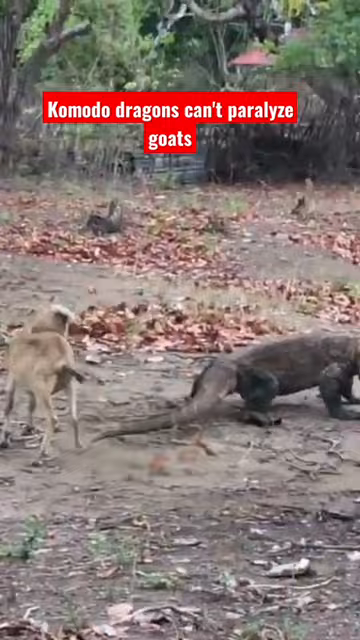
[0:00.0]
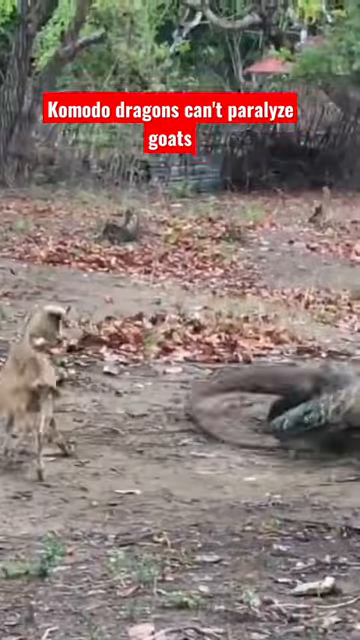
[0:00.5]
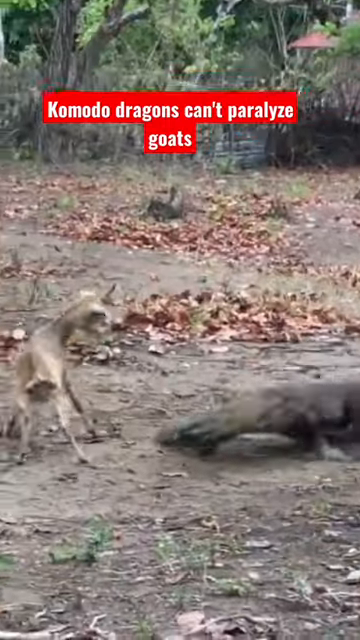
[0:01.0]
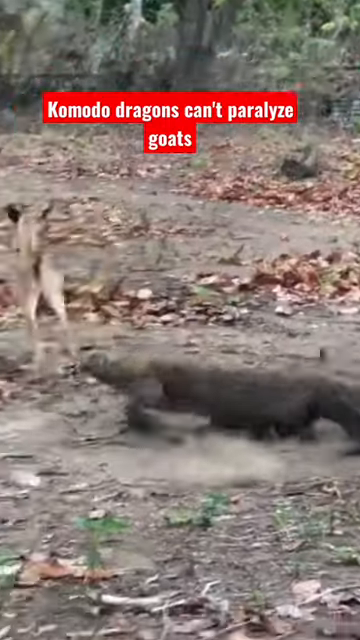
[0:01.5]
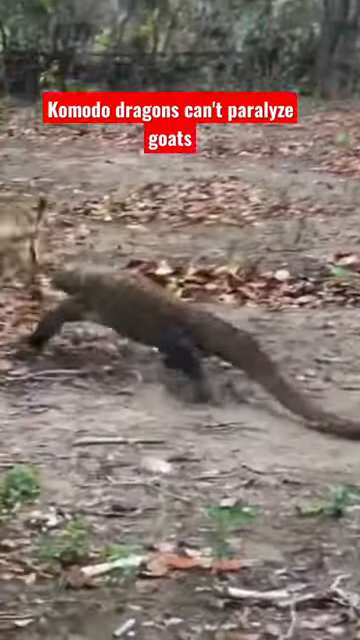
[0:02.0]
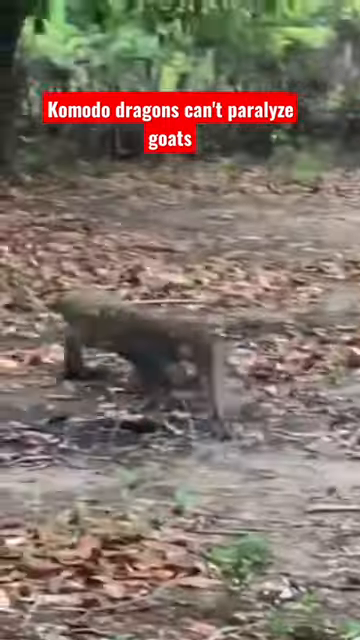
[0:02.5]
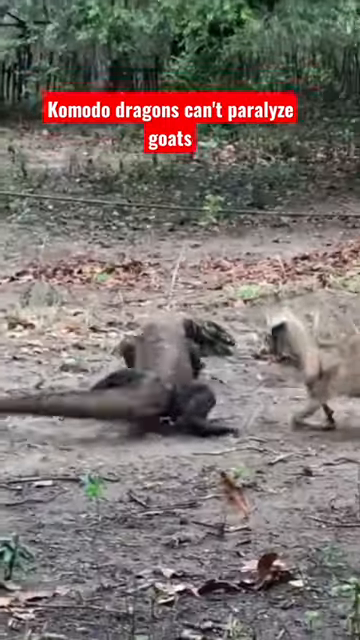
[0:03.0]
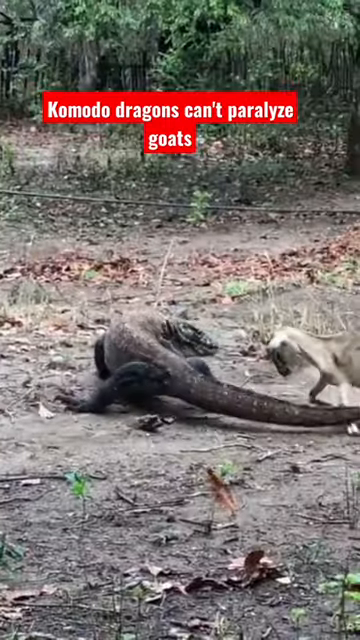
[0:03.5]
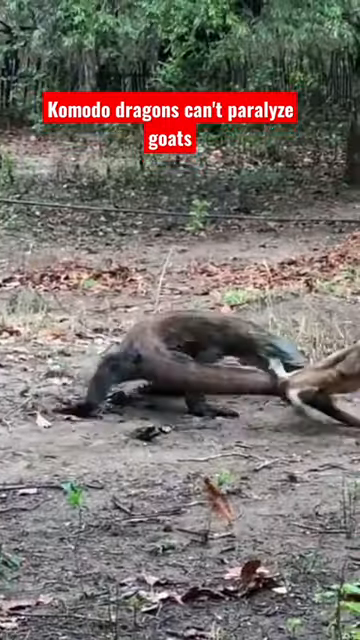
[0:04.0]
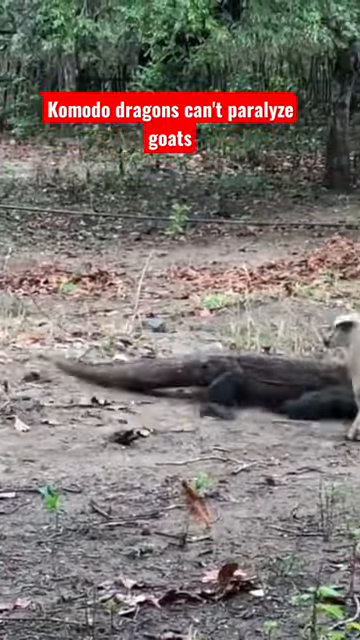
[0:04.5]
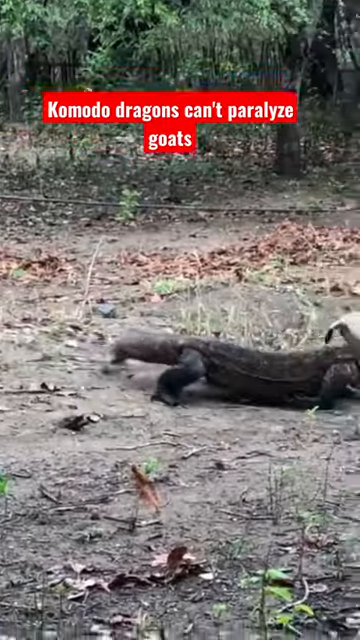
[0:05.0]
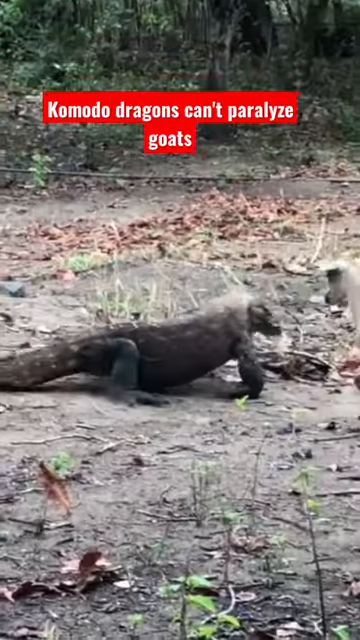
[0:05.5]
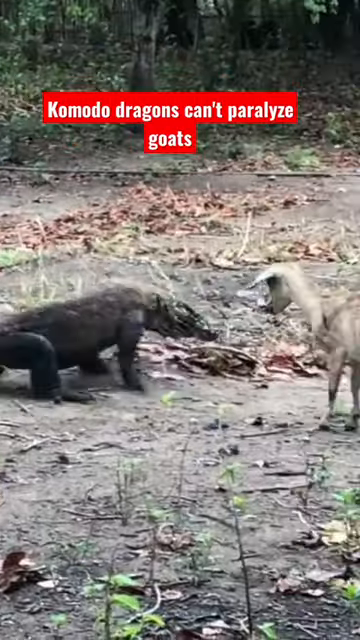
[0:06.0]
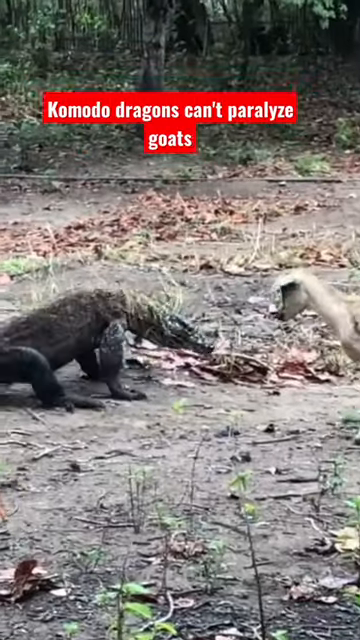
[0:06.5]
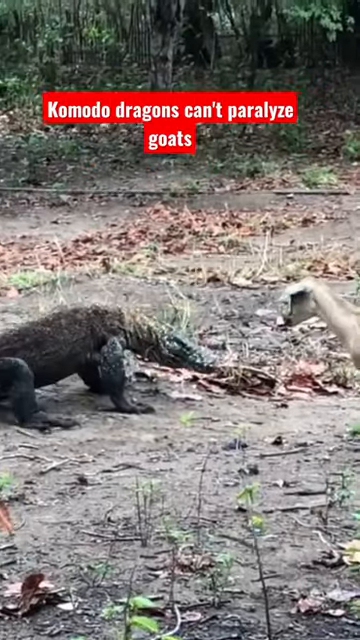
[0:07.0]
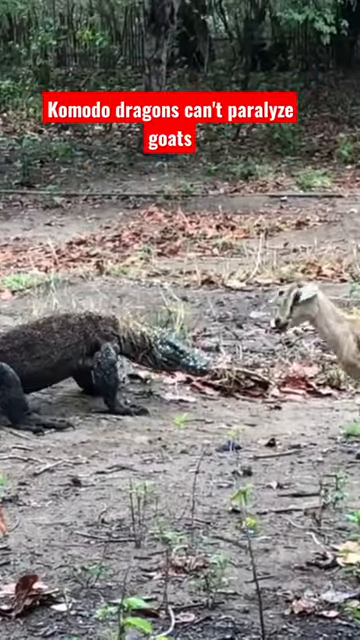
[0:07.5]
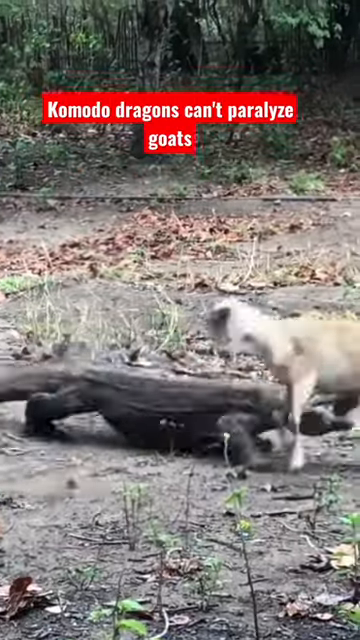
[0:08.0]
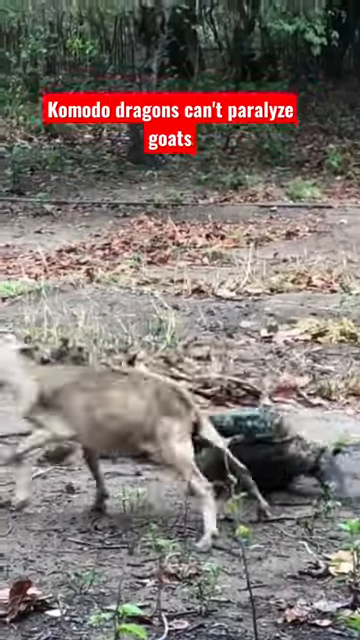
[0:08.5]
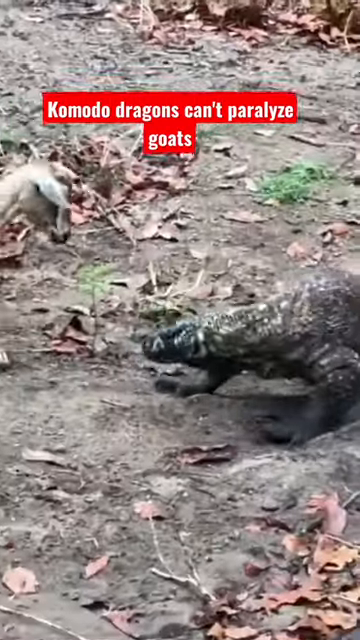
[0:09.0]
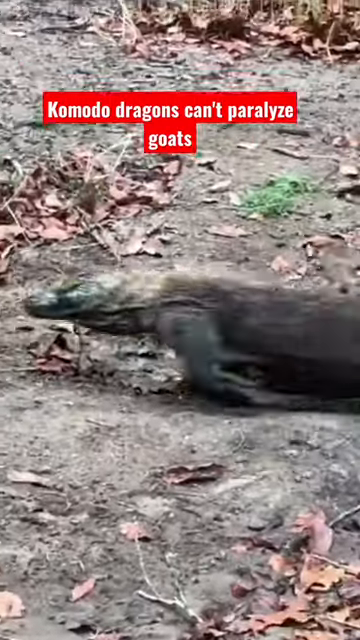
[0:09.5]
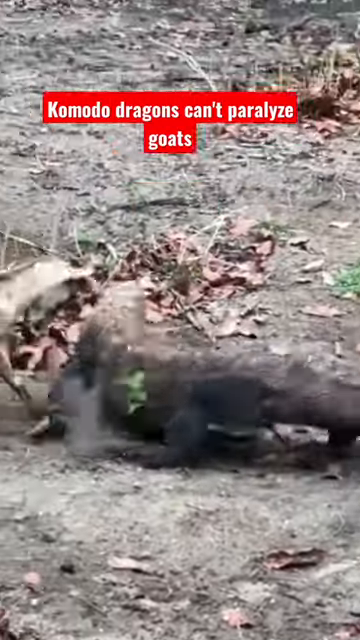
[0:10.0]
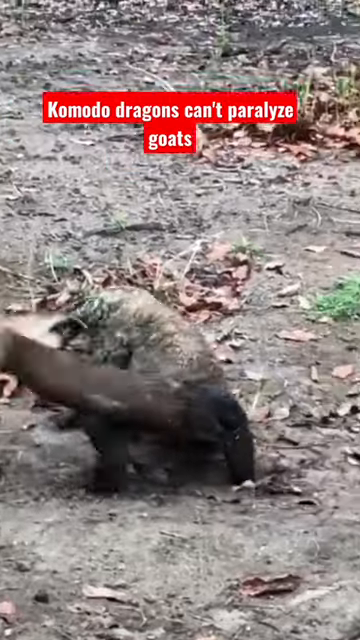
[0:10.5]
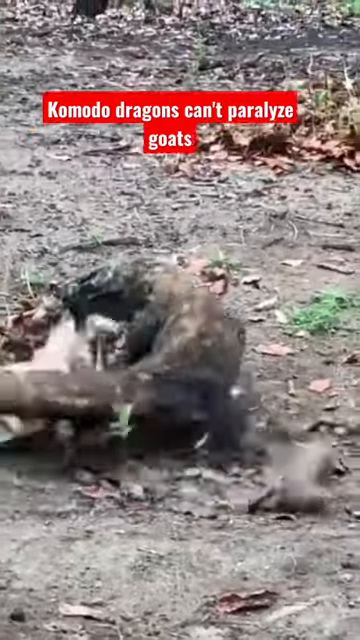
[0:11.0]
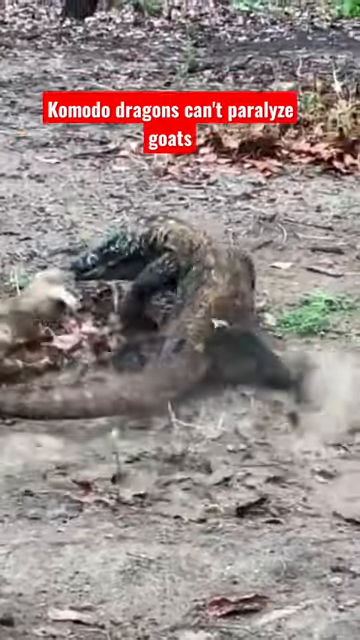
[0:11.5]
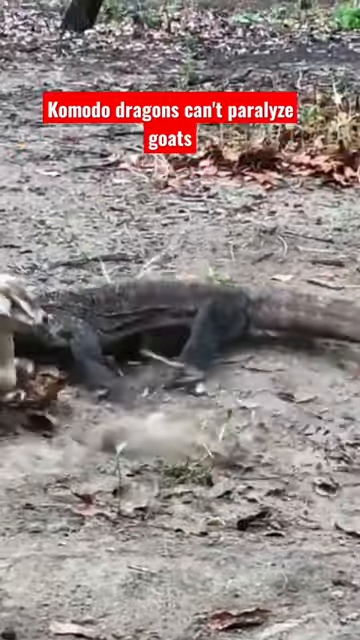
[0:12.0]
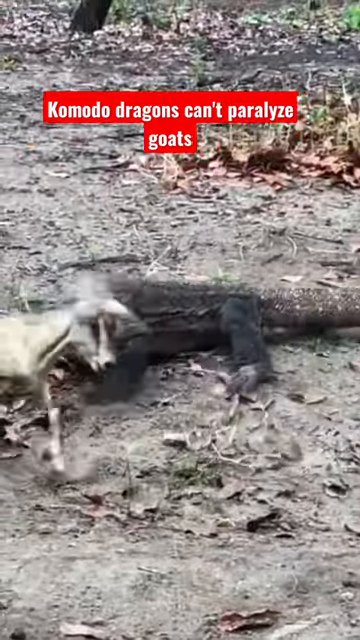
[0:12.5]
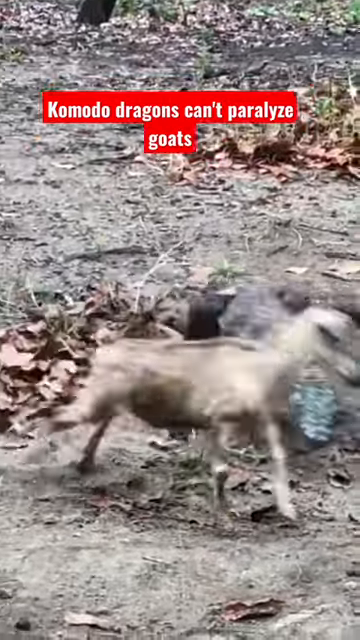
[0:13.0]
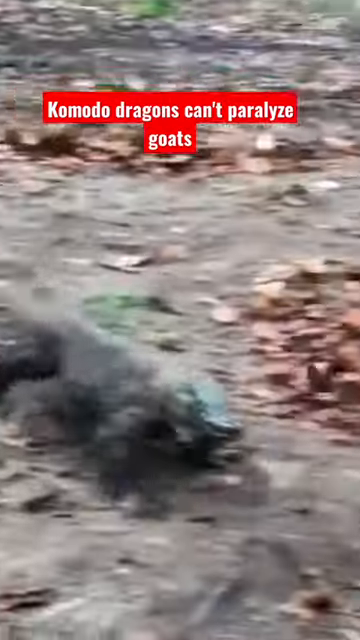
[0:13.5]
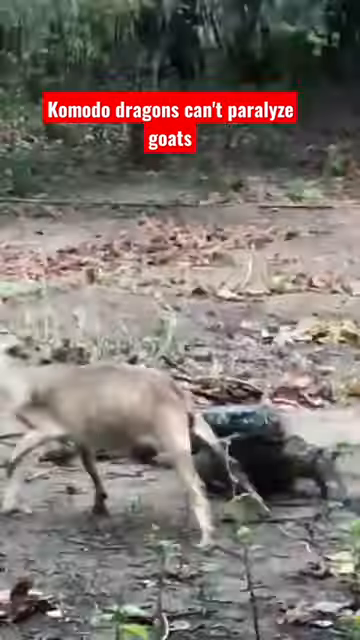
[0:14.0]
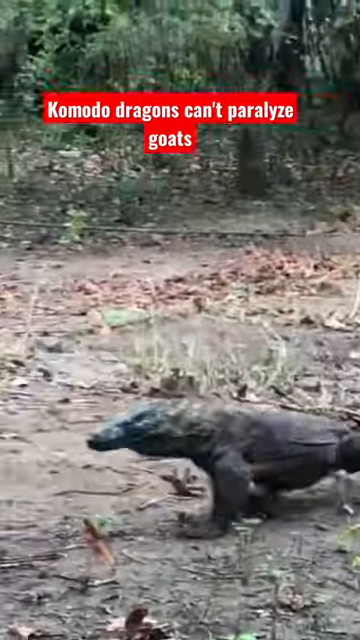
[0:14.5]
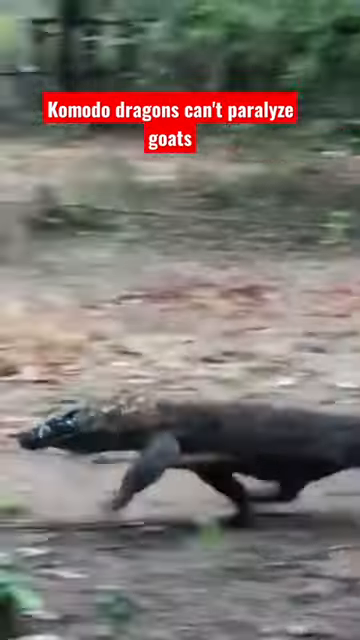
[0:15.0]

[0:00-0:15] At first it is difficult to tell what is going on, but white text on a red background appears on the screen, reading "Komodo dragons can't paralyze goats." What looks like a baby goat is running around while a Komodo dragon tries to bite it. The footage does not look choreographed; it seems someone perhaps caught it in the wild. The Komodo dragon is very aggressive and even uses its tail to hit the goat, but it cannot land a bite. The goat is able to juke the Komodo dragon and run around it without taking any hits.